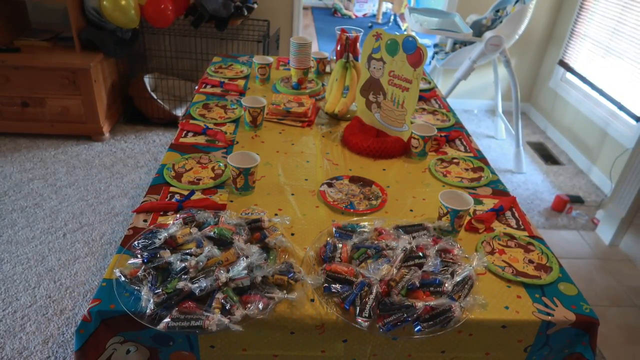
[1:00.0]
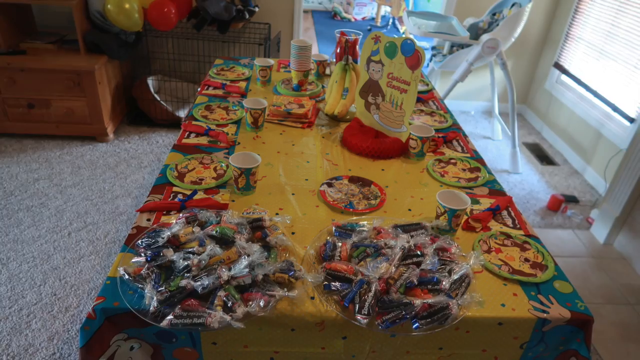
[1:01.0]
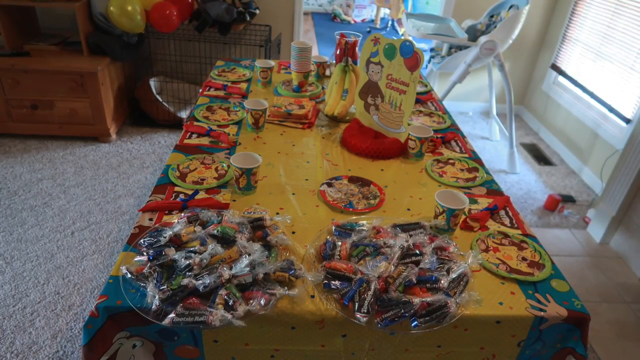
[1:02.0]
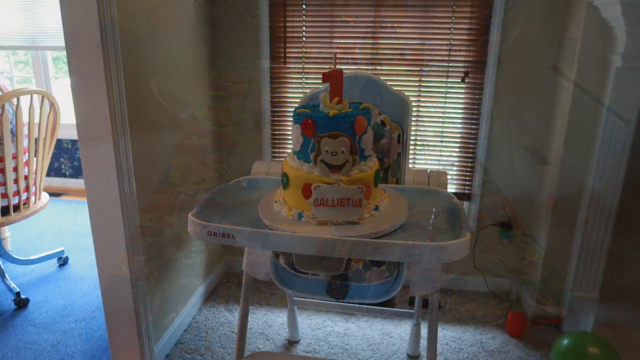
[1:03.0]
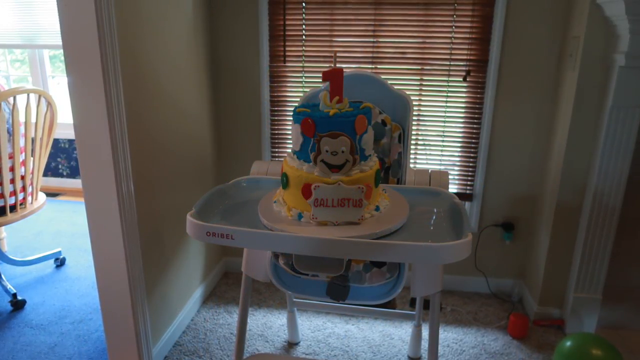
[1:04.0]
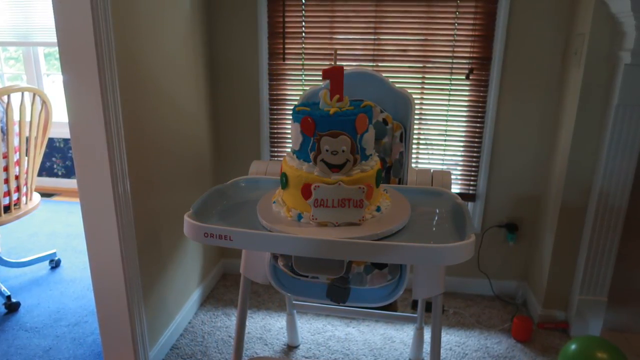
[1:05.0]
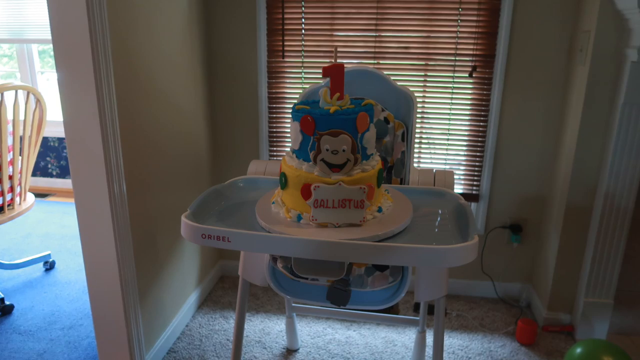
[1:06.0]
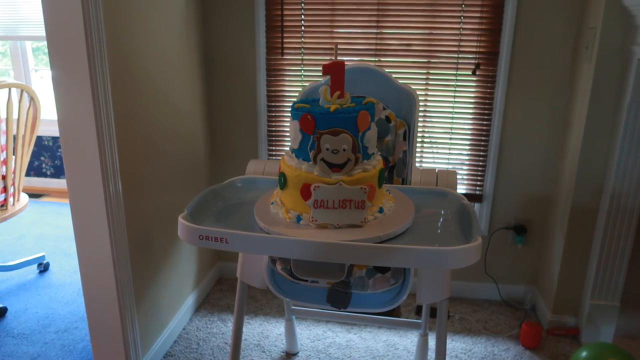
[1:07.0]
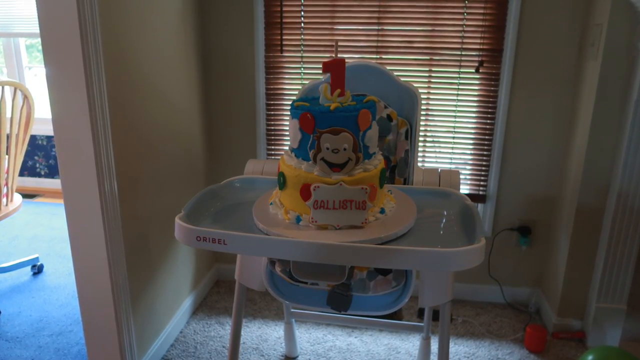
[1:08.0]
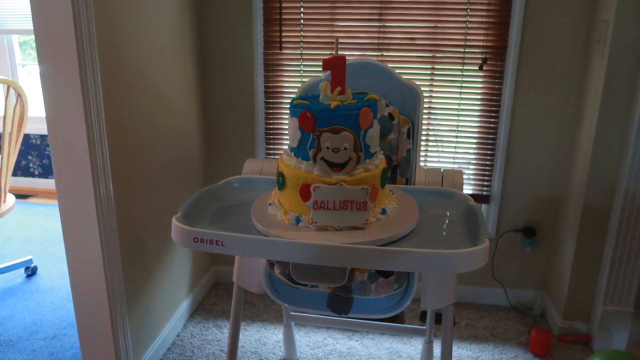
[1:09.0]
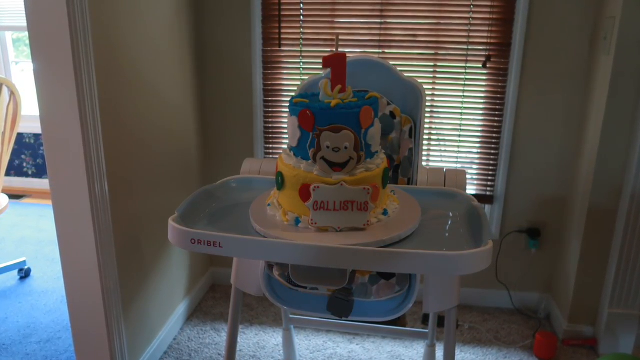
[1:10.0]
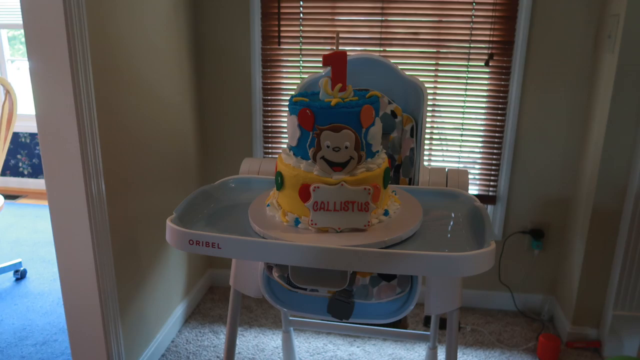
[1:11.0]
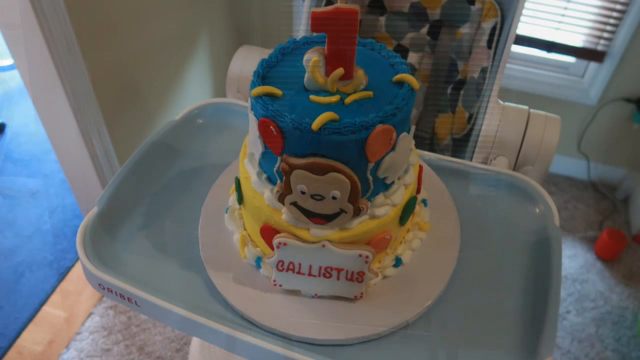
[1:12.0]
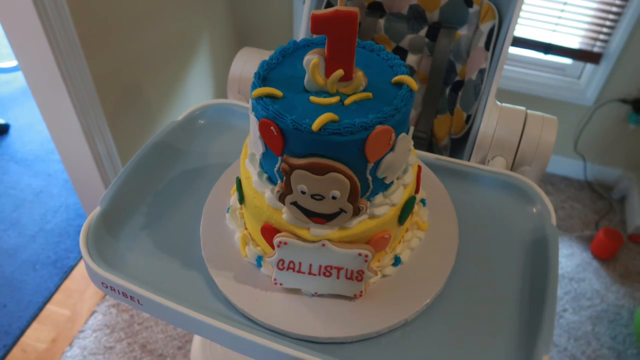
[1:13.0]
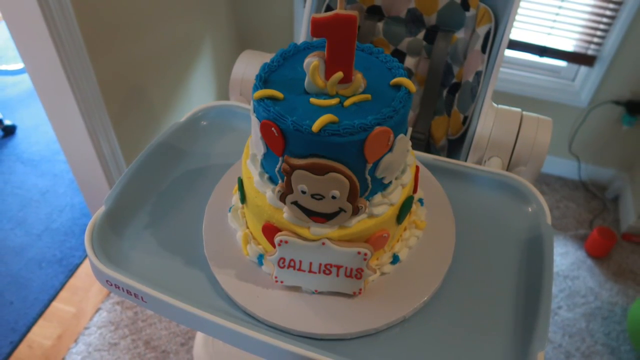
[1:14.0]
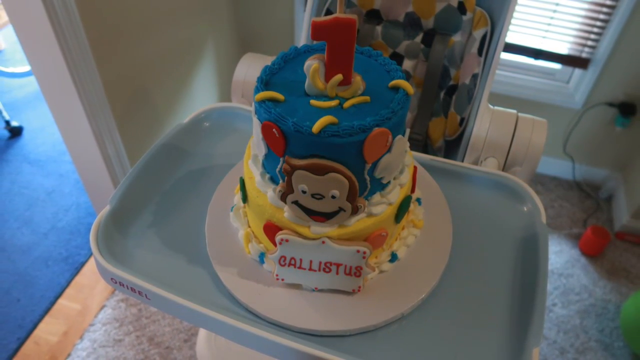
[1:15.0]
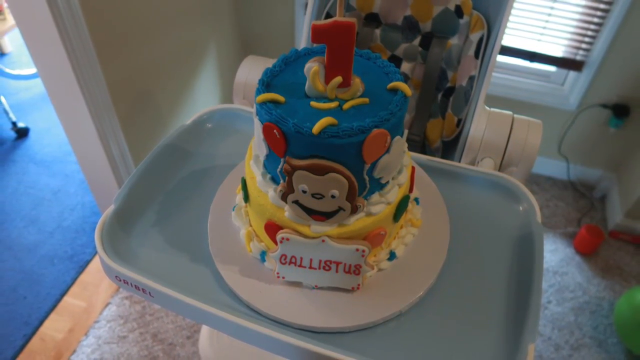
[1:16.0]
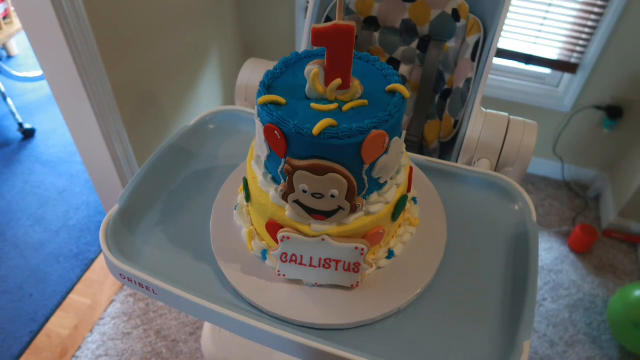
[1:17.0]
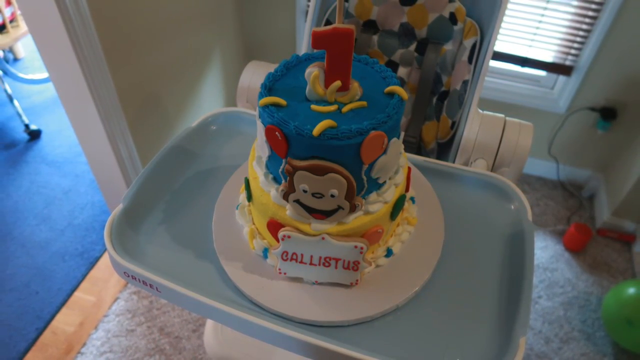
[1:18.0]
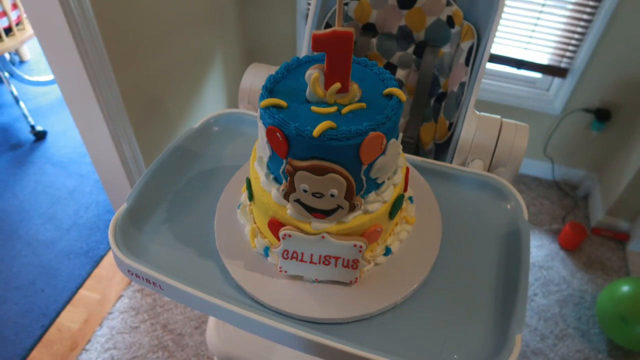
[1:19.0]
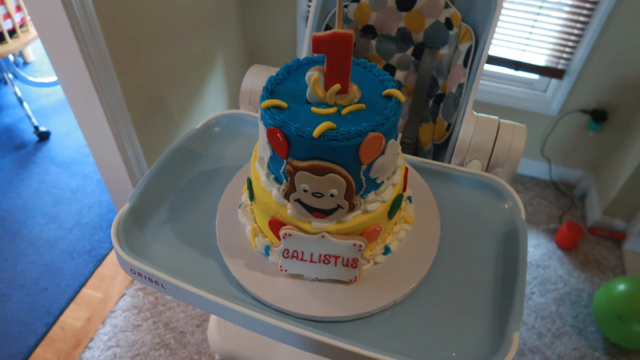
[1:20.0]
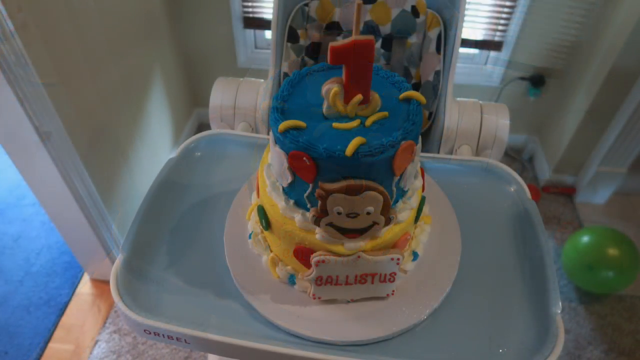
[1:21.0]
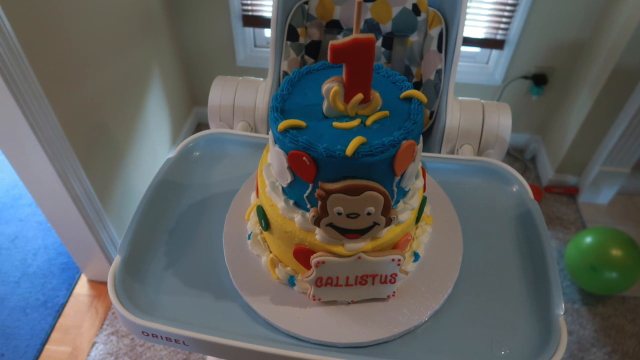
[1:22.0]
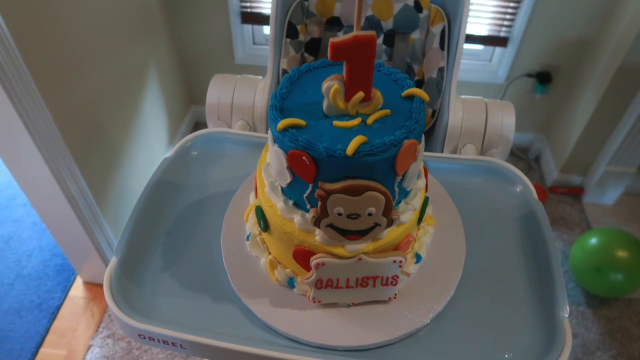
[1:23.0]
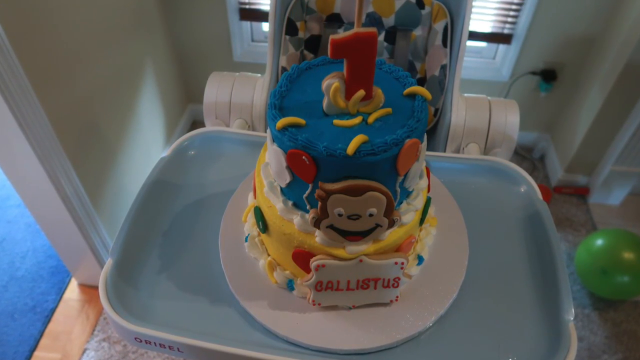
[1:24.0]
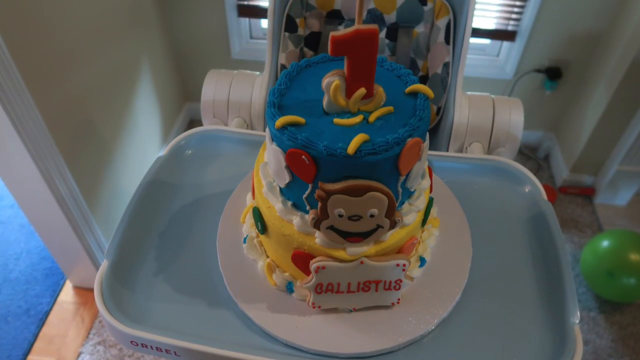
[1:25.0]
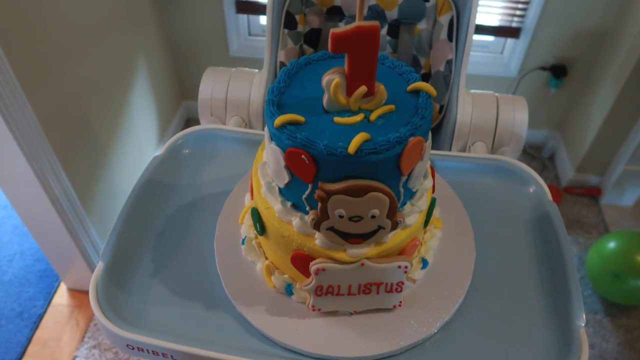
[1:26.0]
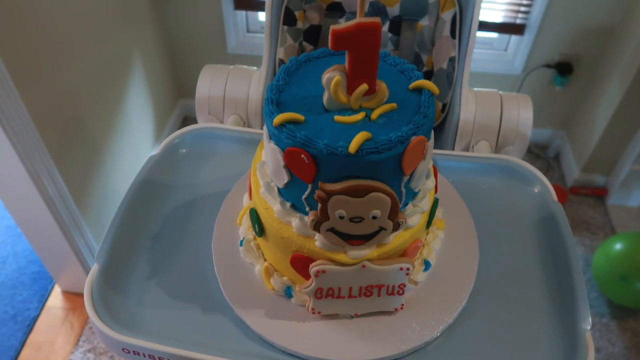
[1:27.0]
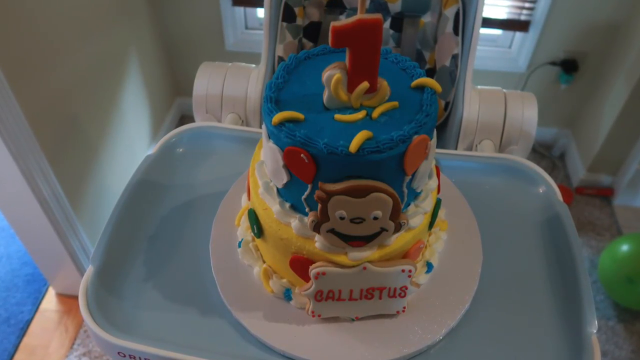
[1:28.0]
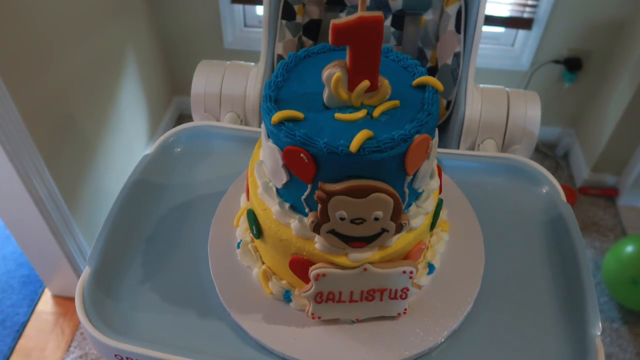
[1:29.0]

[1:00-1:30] A long shot shows the birthday table of the Curious George themed party, with a Curious George tablecloth, plates, cups, napkins, and a centerpiece with a picture of Curious George and a cake, plus a bunch of bananas on the table. The next shot shows the cake itself on his high chair. It is a two-layer cake that looks to be colored yellow and blue, with an image of Curious George on the front and a giant red candle with the number one on top. The baby's name, Callistus, is on a sign on the front of the cake; it is unclear whether it is fondant and edible or not. A closer, top-down shot of the cake shows what are apparently candy bananas or some form of banana decoration on top of the blue second layer, and balloons and clouds along the blue edges of the top layer, apparently edible. Another shot of the cake follows.